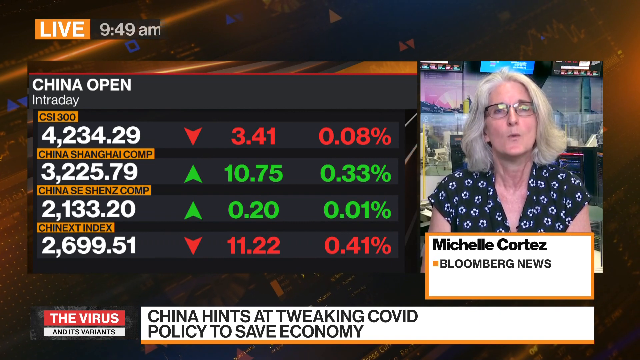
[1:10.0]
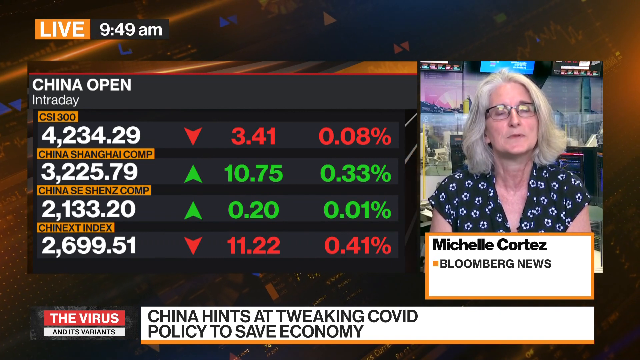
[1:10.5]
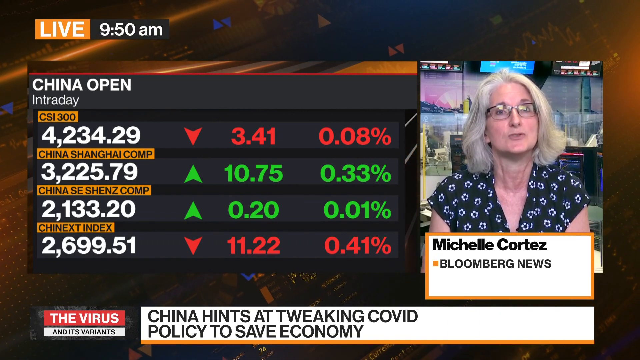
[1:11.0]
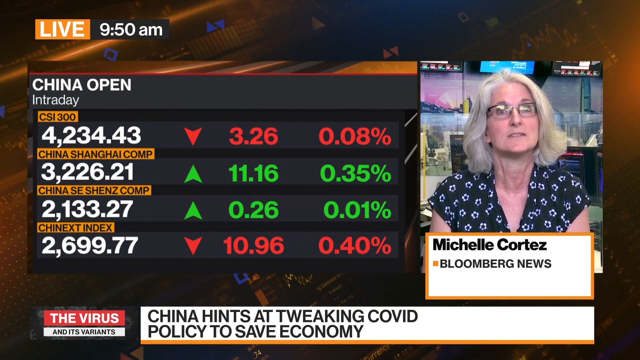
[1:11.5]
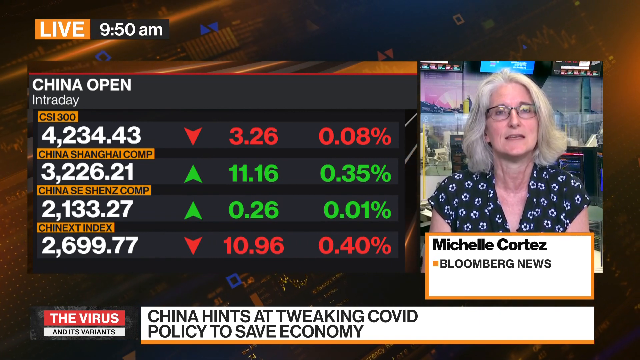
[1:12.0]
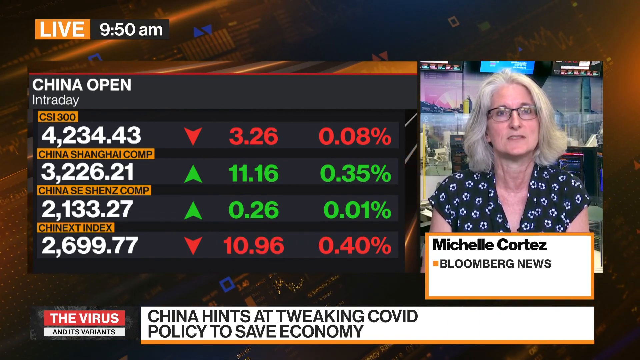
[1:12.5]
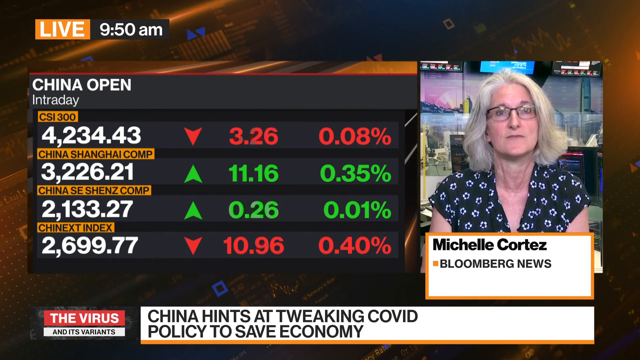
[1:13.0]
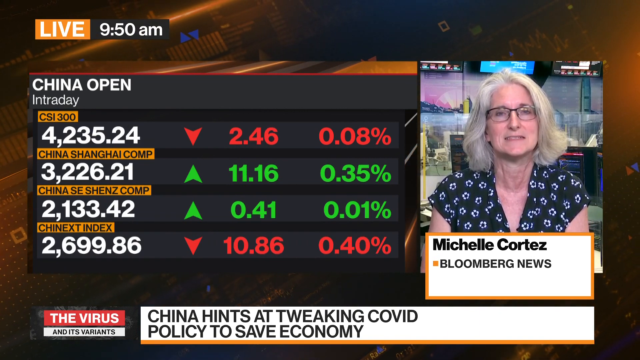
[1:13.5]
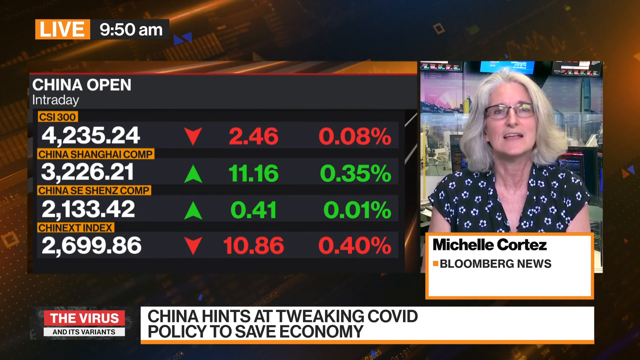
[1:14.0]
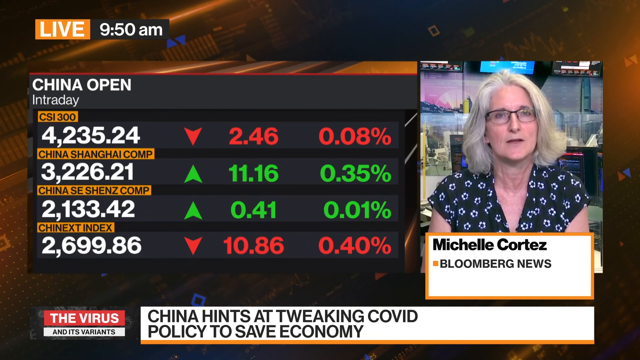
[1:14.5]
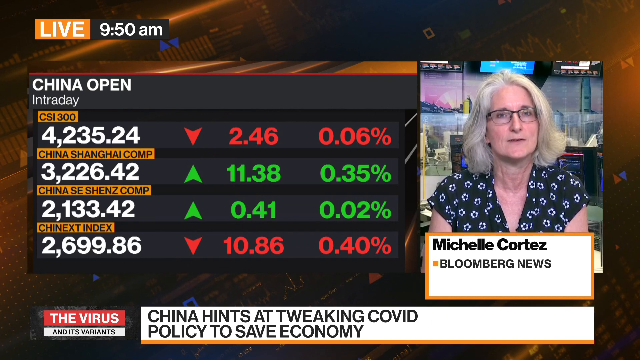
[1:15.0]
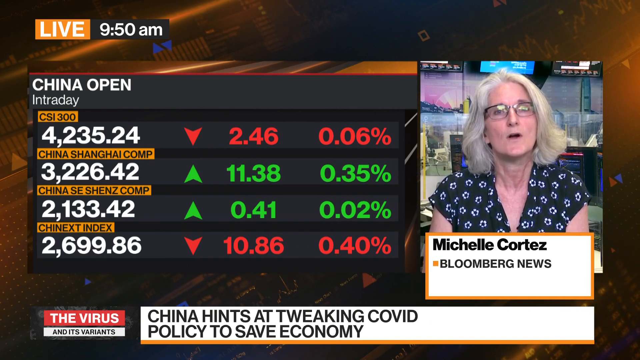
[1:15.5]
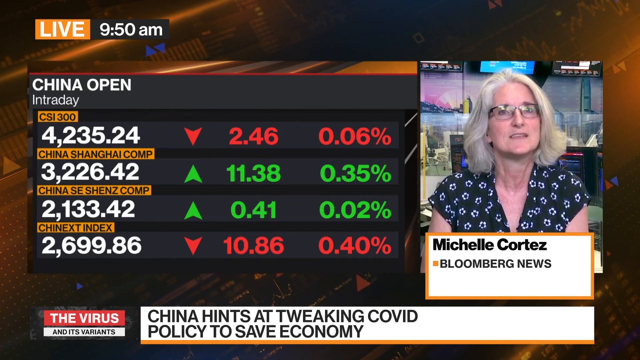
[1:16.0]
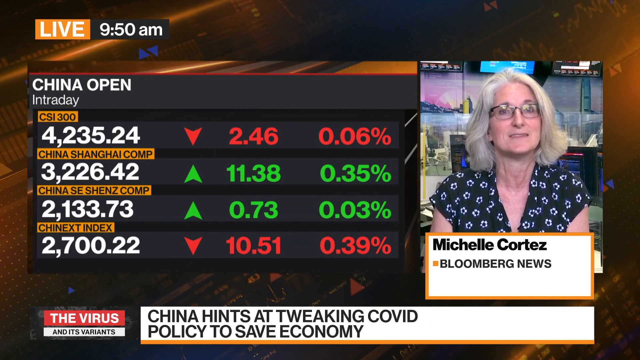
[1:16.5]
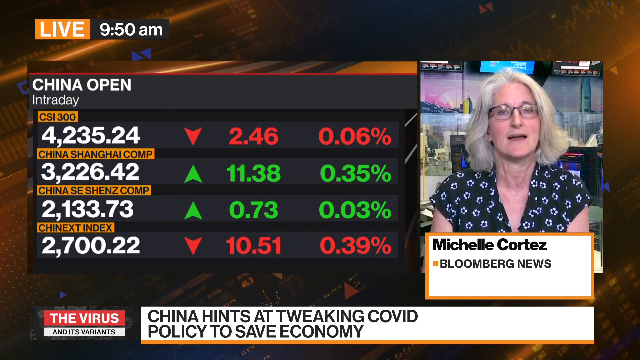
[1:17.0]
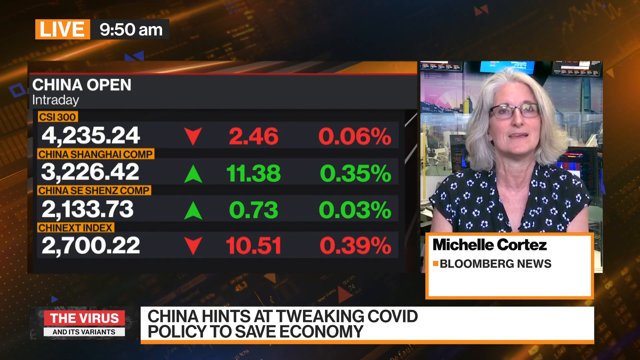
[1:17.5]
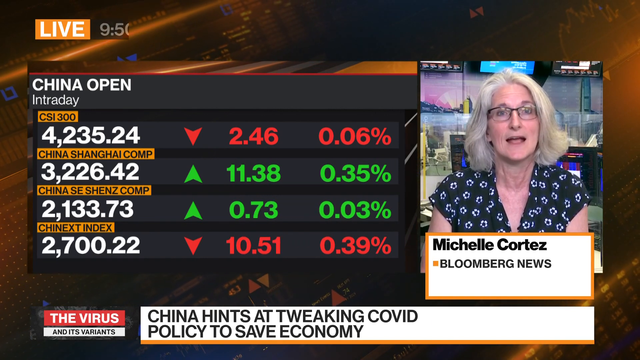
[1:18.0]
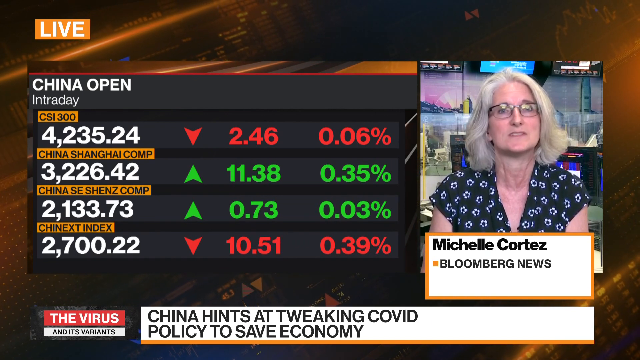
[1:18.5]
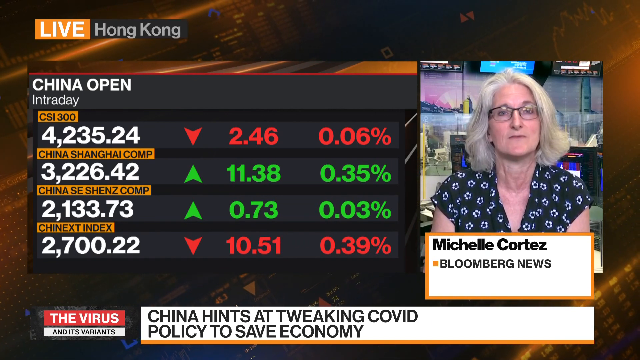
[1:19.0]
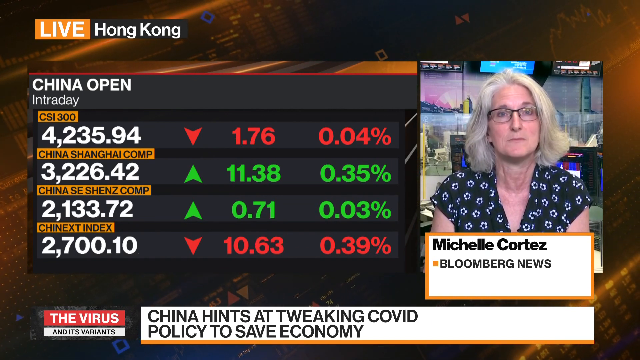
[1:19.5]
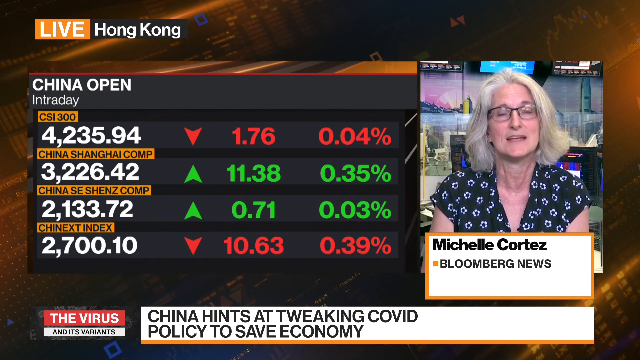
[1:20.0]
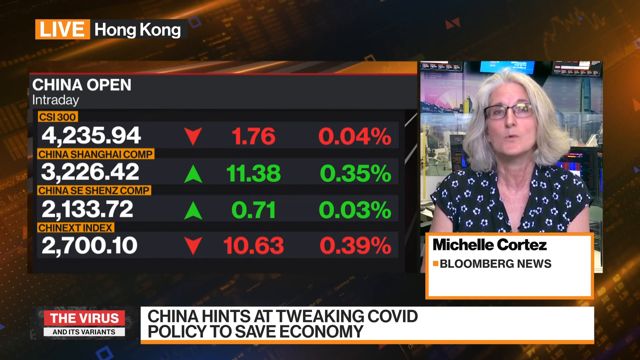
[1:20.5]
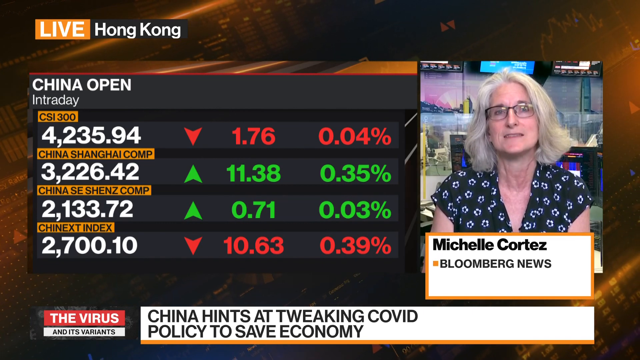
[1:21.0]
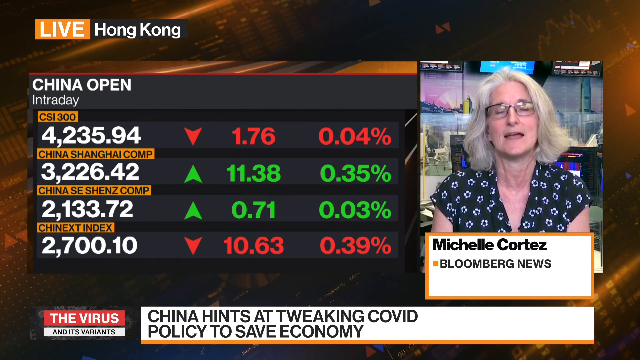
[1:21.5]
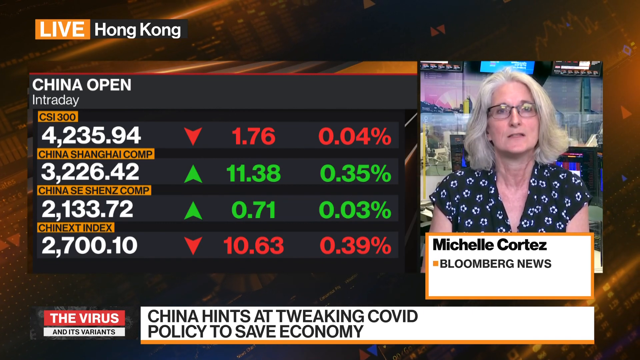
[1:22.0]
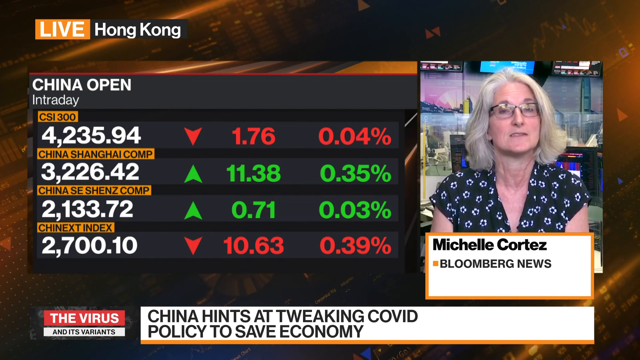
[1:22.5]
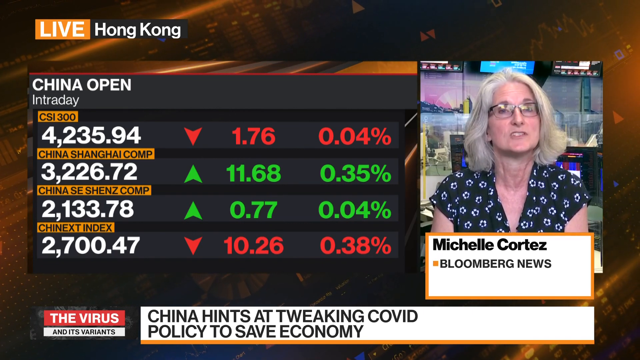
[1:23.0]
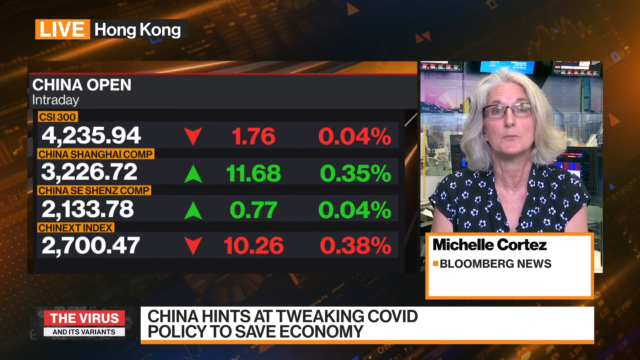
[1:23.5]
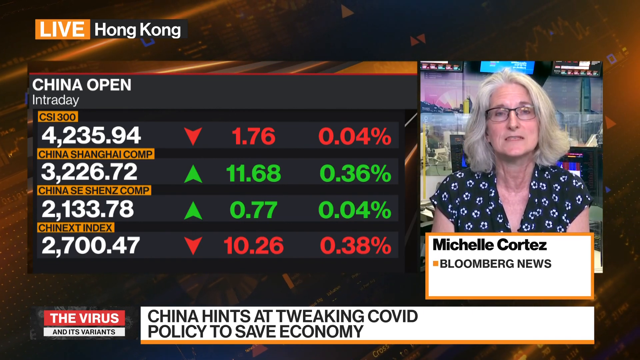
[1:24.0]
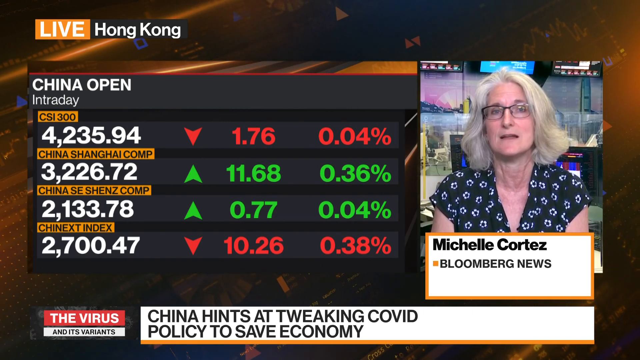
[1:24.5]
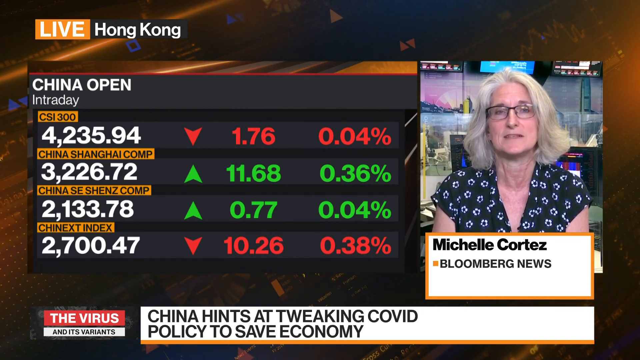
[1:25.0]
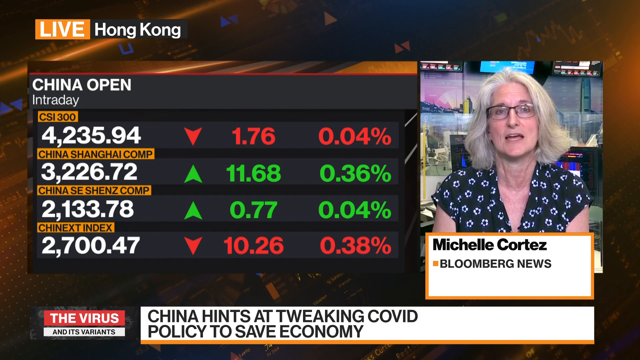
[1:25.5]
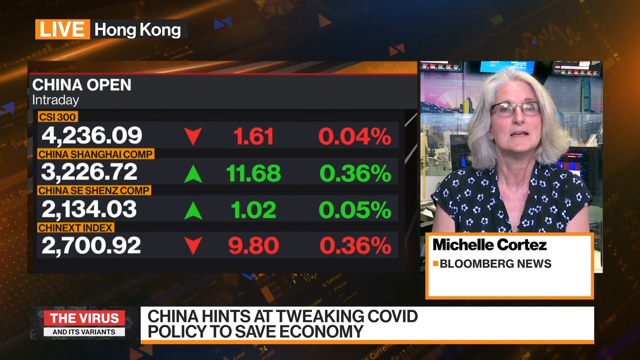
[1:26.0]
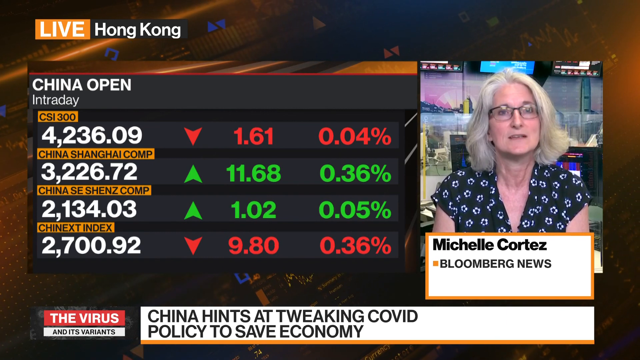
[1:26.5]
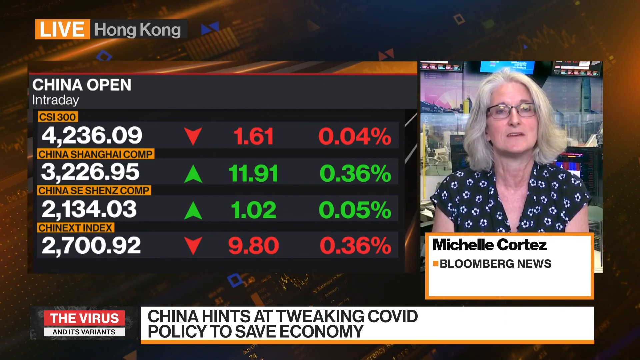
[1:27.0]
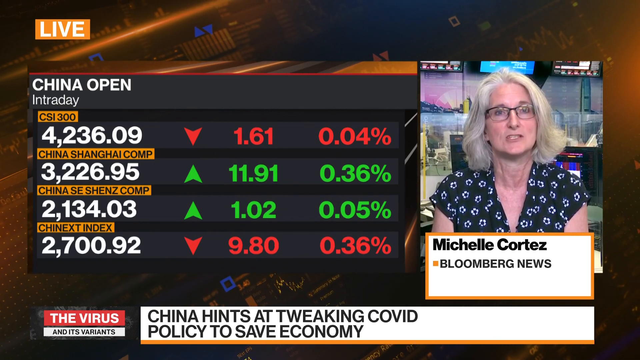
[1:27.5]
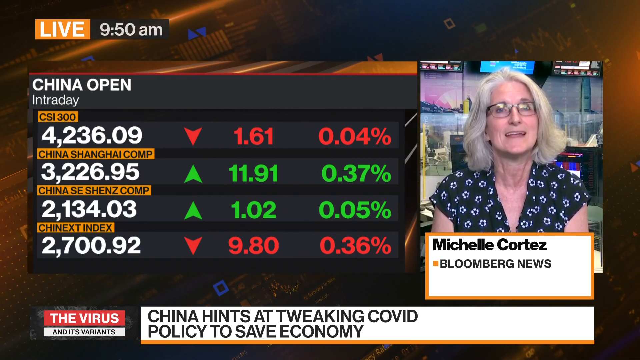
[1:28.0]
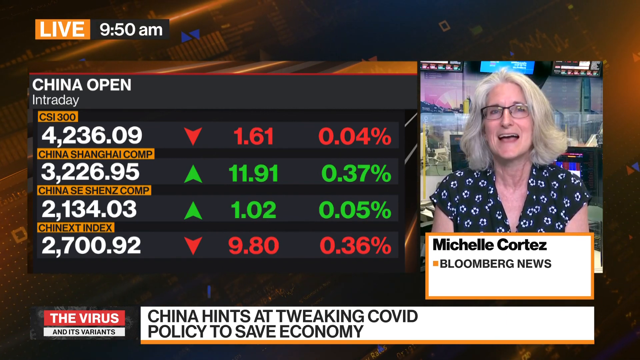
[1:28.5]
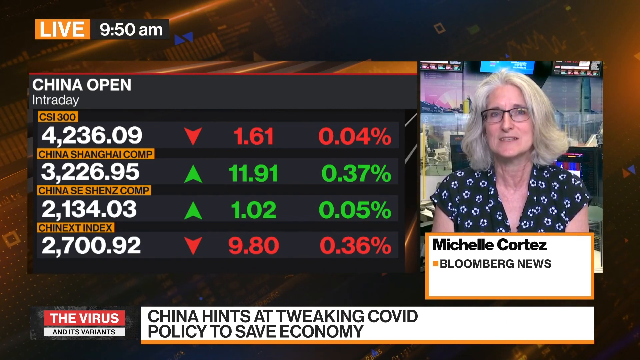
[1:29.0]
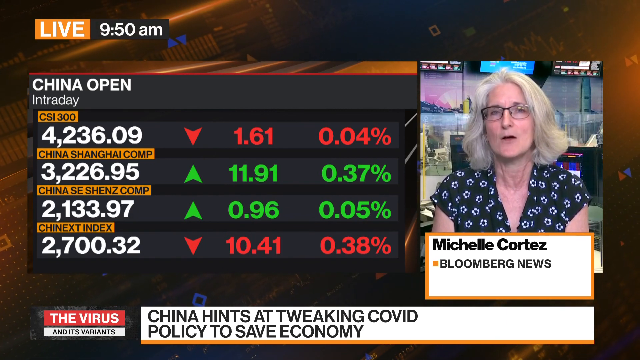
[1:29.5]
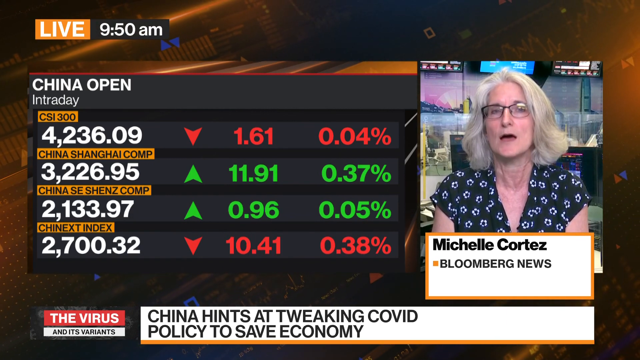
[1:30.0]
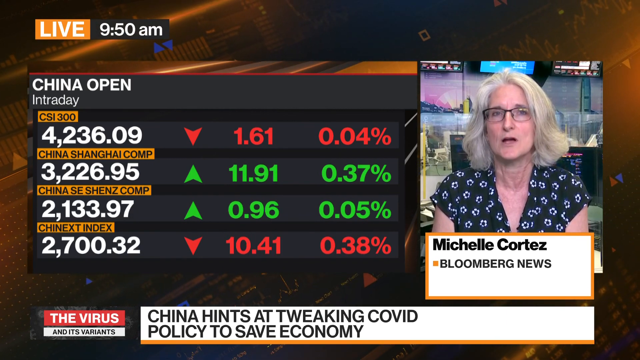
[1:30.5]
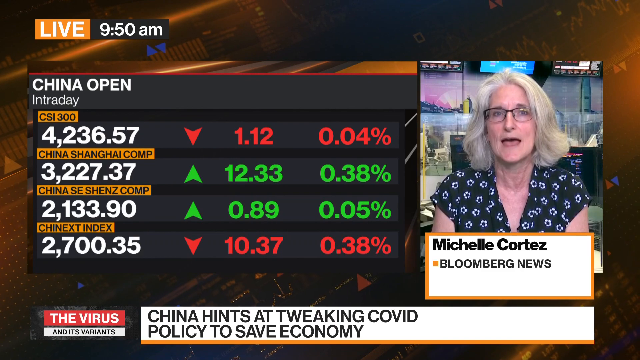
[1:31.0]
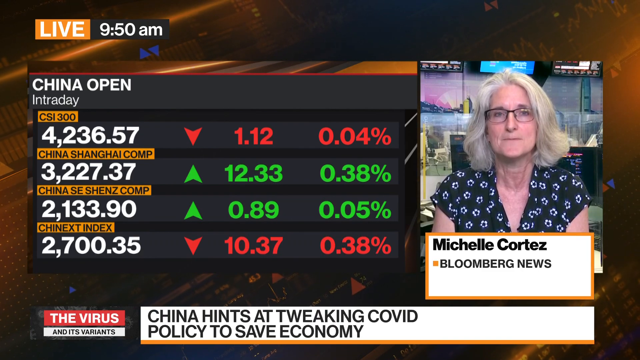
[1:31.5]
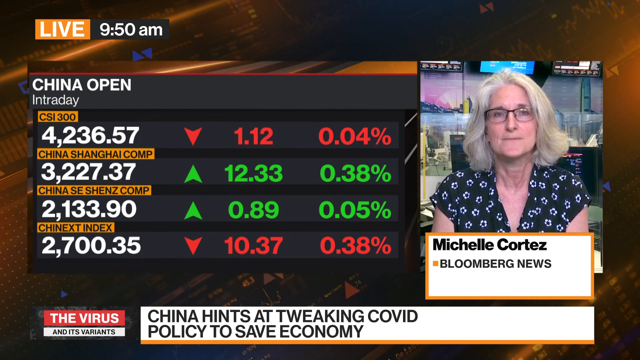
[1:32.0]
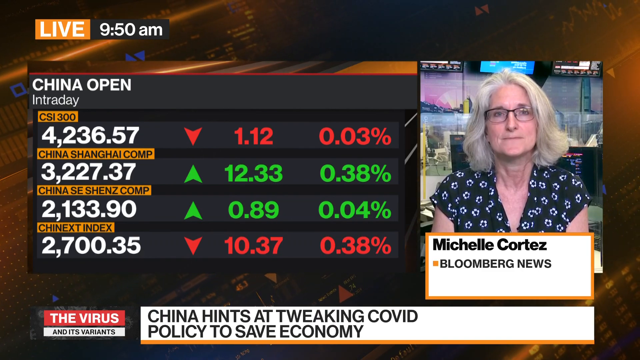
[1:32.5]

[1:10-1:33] A woman, Michelle Cortez, is on the right side of the screen, with "Bloomberg News" directly under her name. She is sitting in a newsroom with many monitors and computers behind her. The top left of the screen reads "Live 950 AM," and directly underneath is a chart reading "China Open" that gives information about China's stock market; its data updates the whole time. At the bottom of the screen, on the far left, is a logo reading "the virus and its variants," and directly to its right is a white banner reading "China hints at tweaking COVID policy to save economy." Michelle Cortez speaks to the camera the entire time.